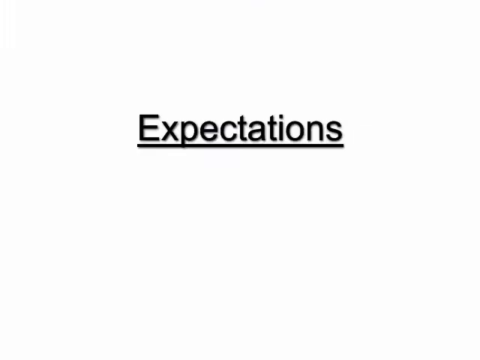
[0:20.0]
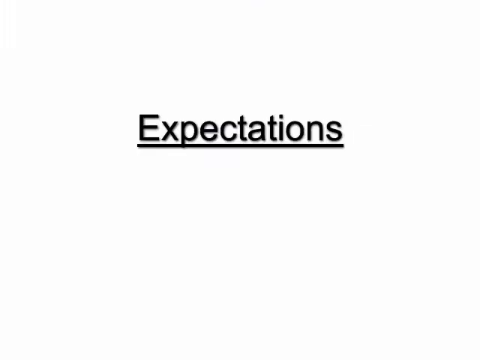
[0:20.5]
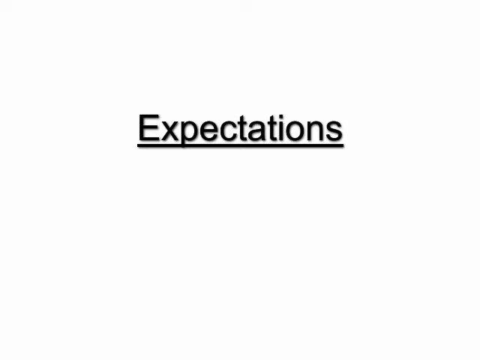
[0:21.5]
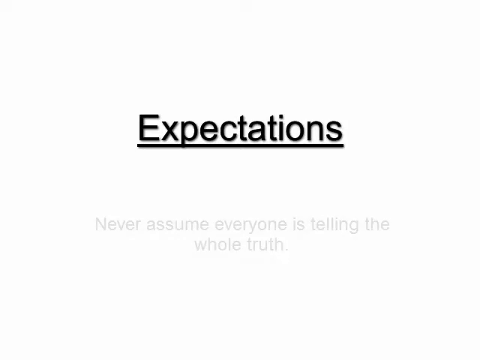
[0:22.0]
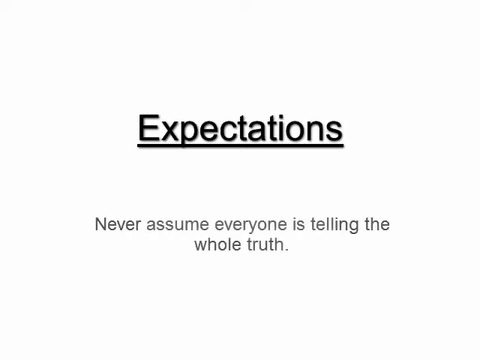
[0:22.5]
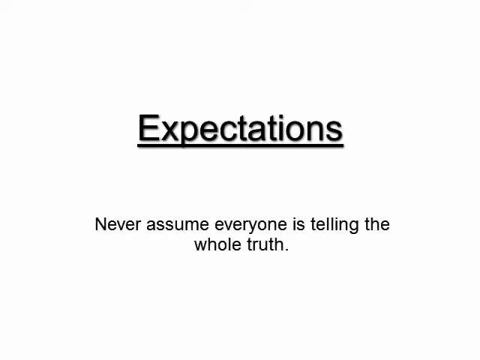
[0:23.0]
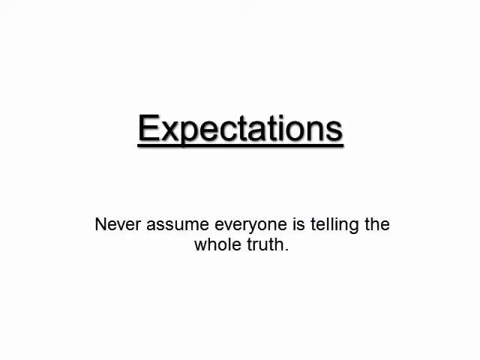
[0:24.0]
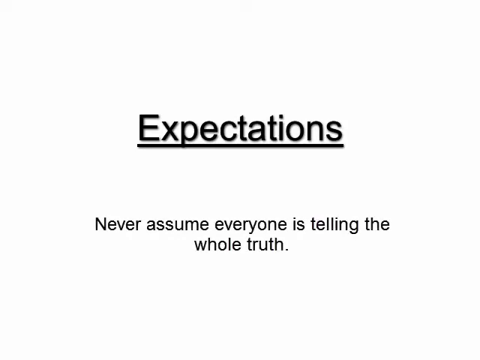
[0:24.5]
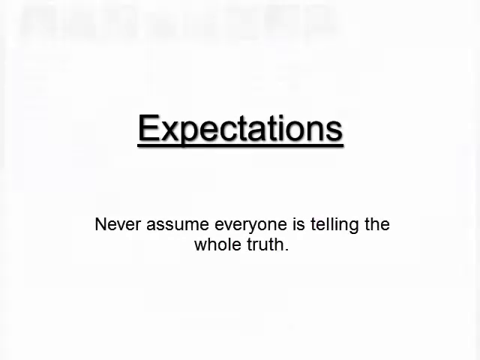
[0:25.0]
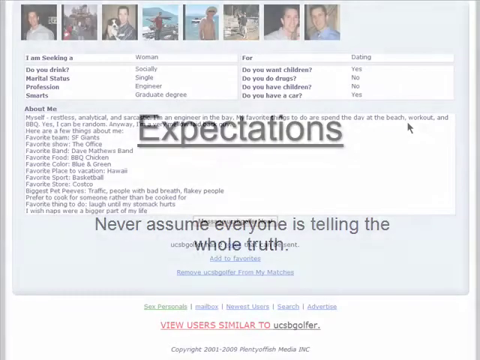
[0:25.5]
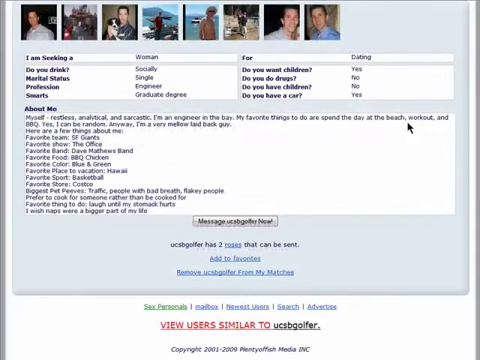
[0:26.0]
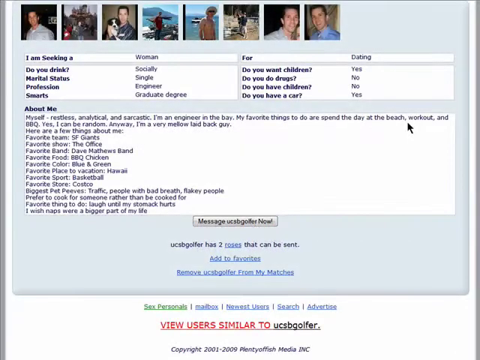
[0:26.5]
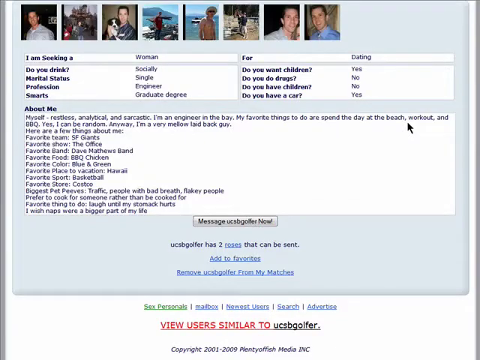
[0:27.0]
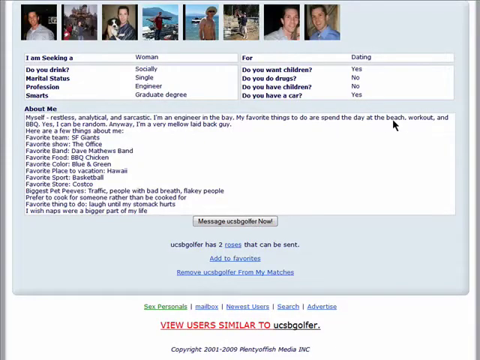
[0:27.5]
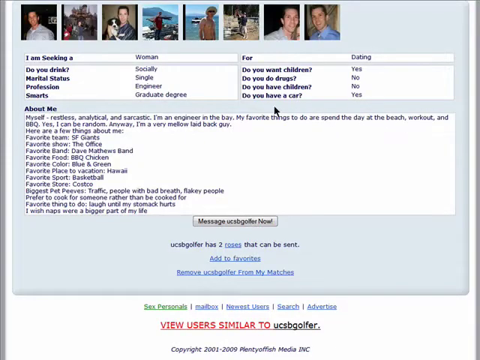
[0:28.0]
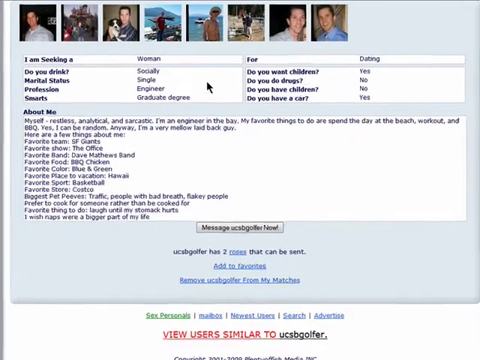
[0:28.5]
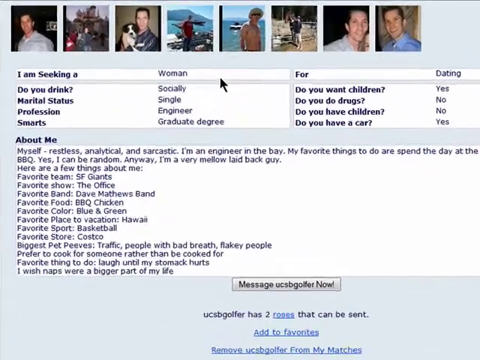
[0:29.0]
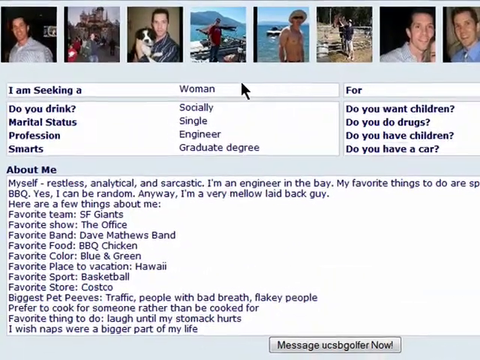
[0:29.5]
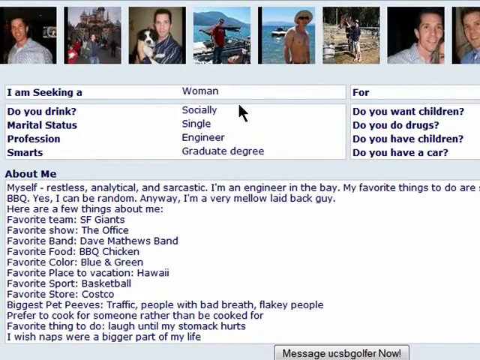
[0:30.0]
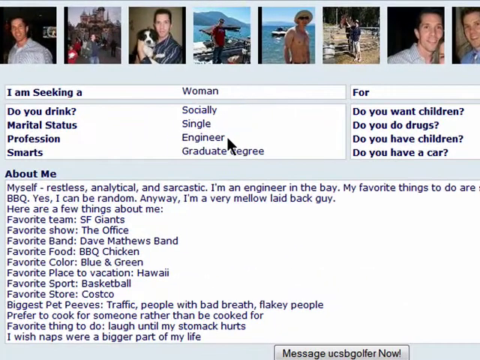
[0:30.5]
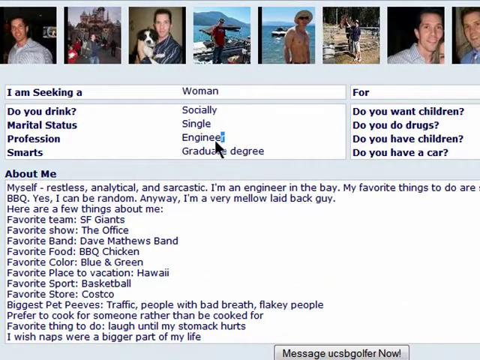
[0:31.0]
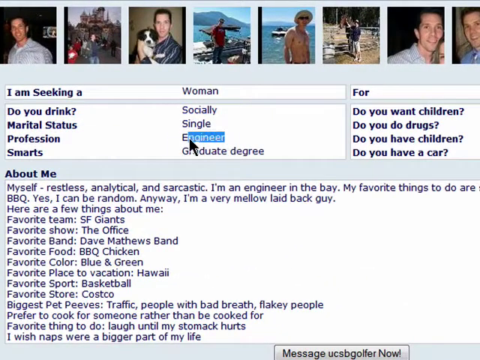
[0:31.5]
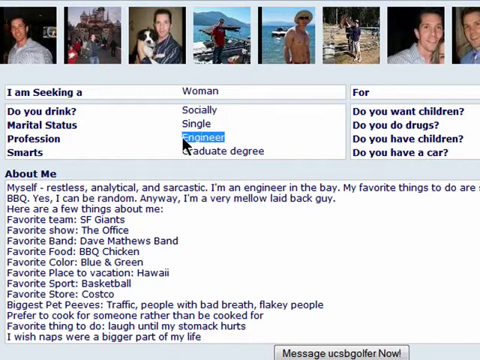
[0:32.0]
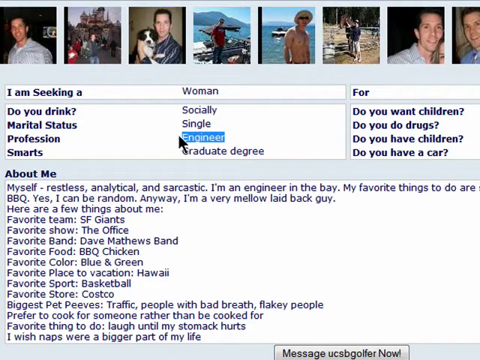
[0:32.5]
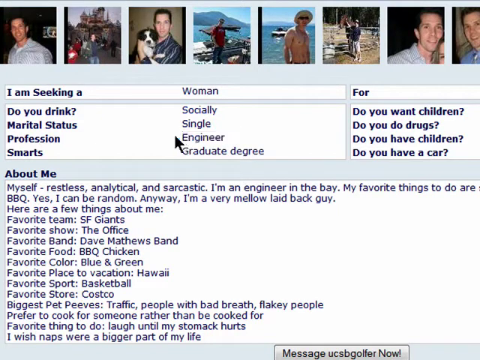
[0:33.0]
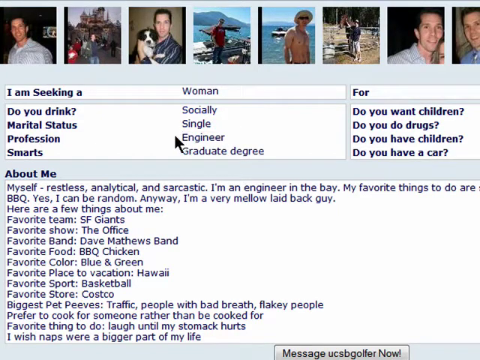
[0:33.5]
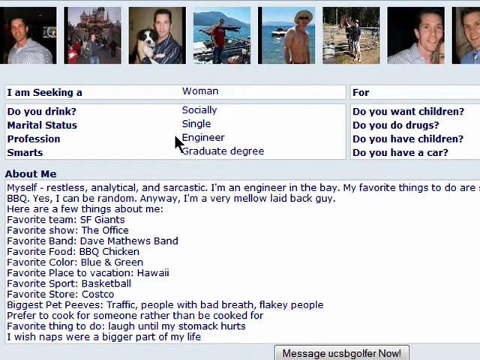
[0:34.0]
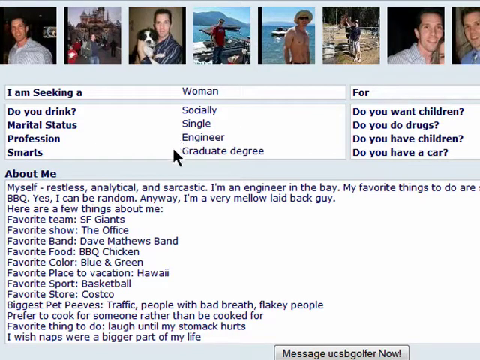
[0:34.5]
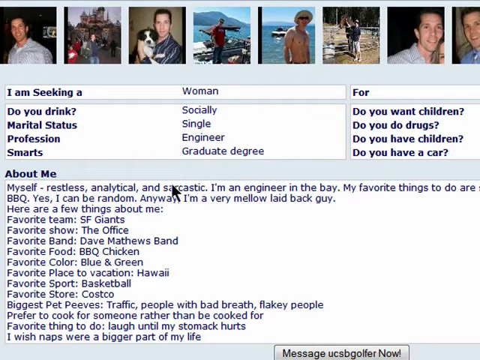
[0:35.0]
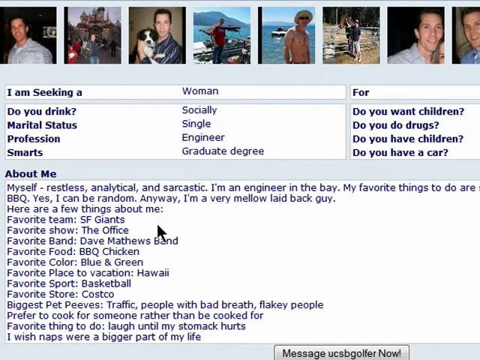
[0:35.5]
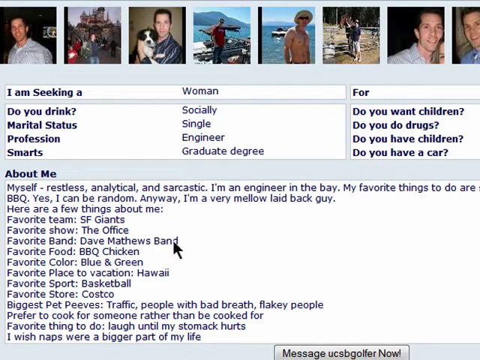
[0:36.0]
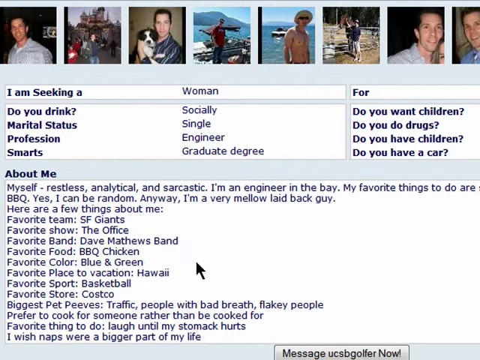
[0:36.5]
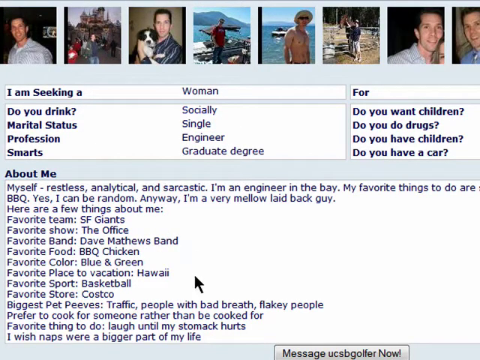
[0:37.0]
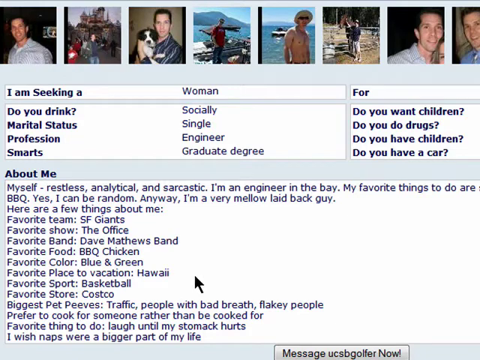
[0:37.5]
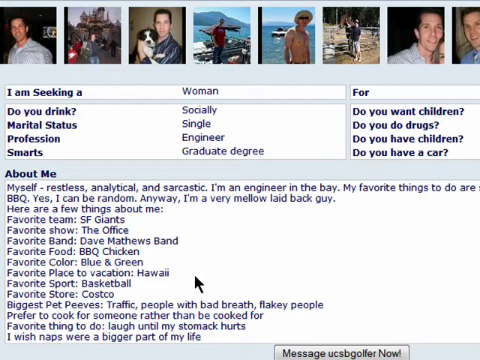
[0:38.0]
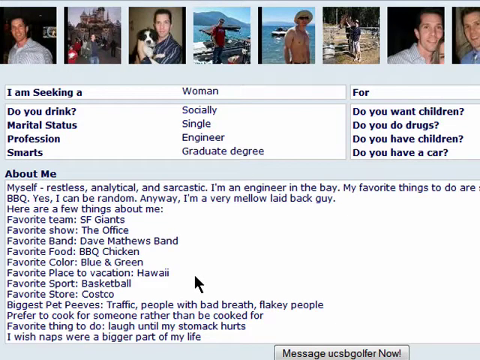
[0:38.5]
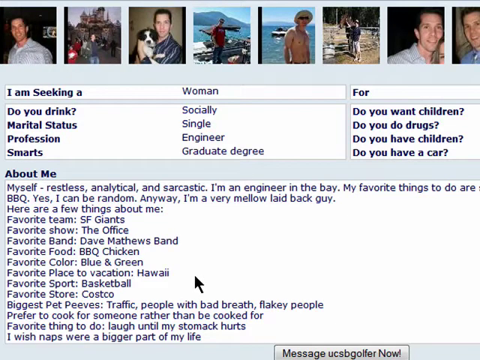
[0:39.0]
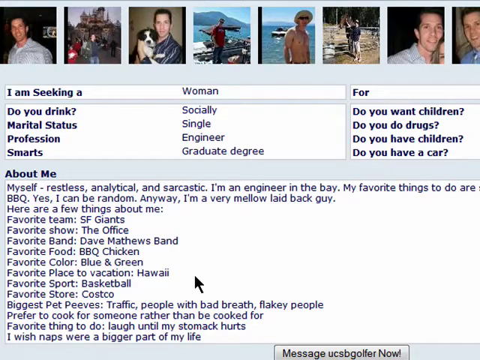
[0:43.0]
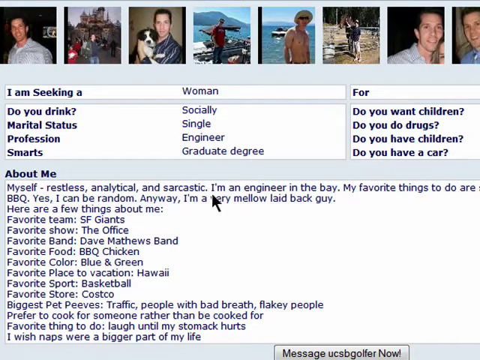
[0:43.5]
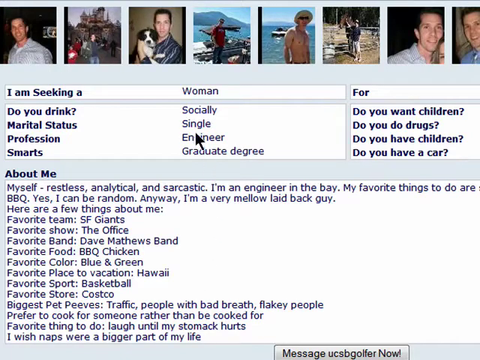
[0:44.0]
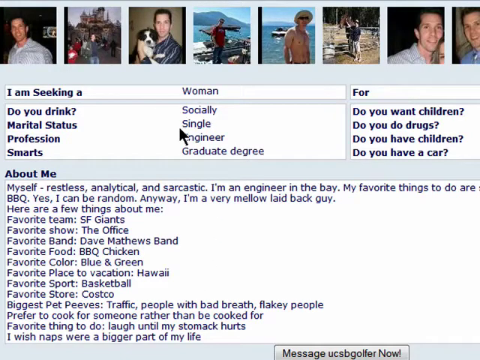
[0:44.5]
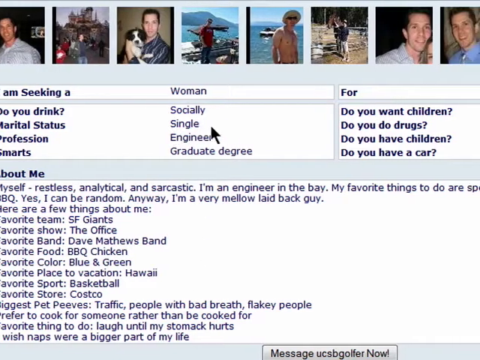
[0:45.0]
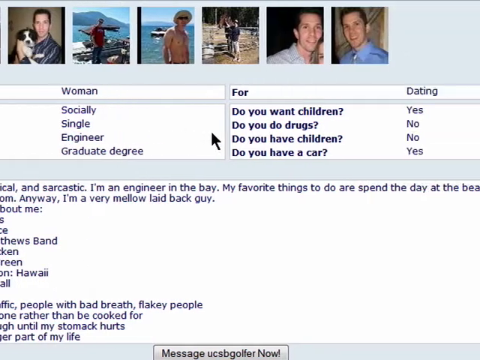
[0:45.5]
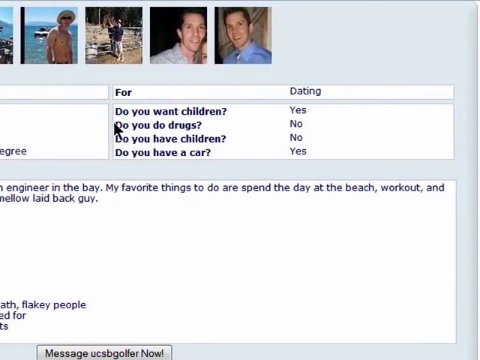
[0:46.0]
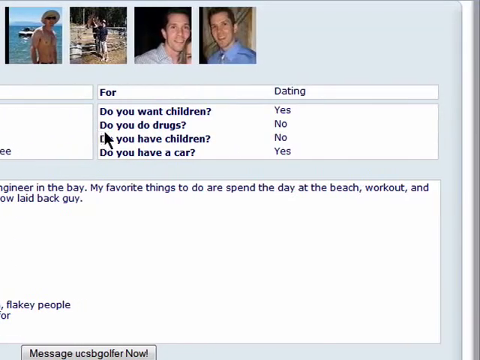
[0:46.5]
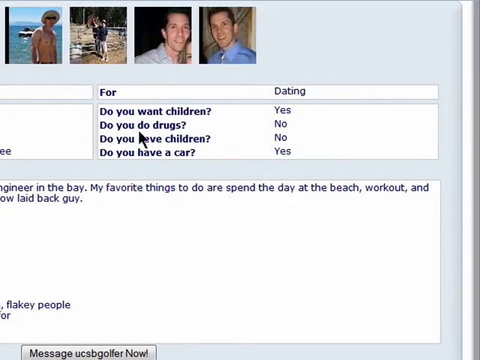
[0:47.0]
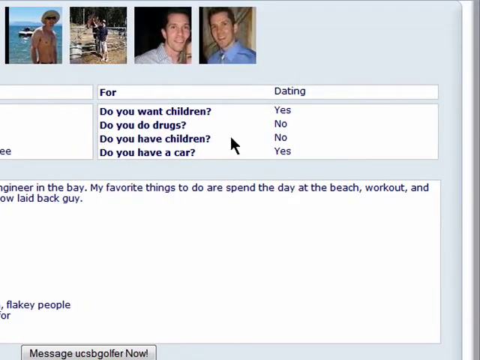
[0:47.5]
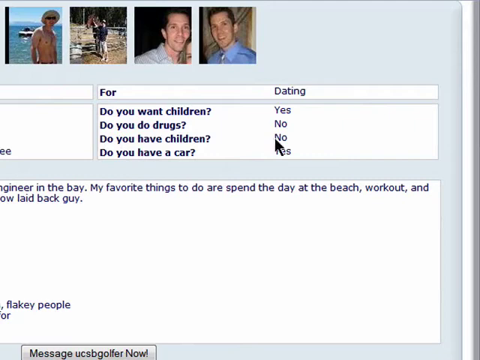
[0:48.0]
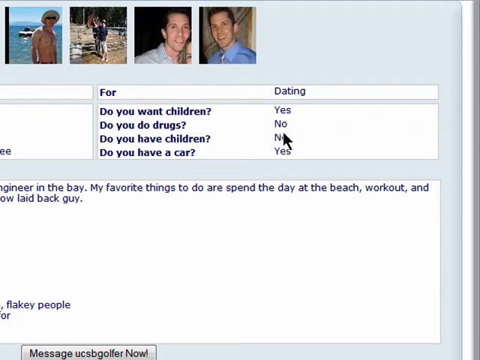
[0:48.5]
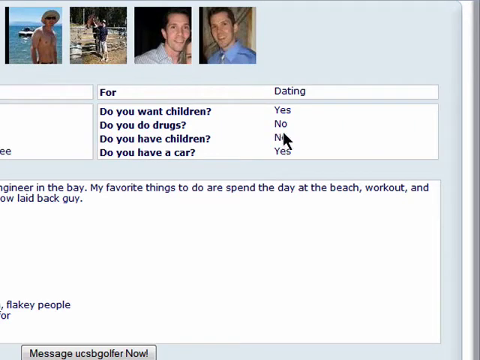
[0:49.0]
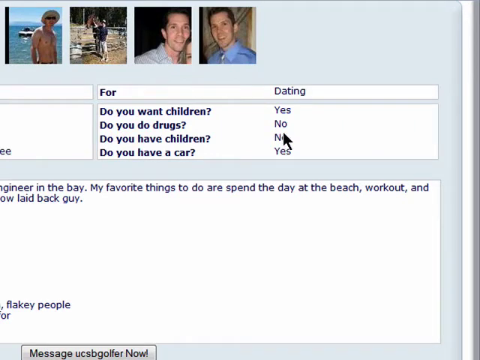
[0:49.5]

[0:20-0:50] A white screen shows the word "Expectations" in black across the middle. After a few seconds, a line appears underneath reading "never assume everyone is telling the whole truth". This fades out to a screenshot of a personal dating page. Across the top are seven images of a man in different settings. Below are boxes for selected items, including do you drink, do you want children, marital status, profession and other dating-related statuses. Underneath is an about me text box with a description the person has written about themselves, then a button for messaging this individual, and a footer for the website at the bottom. A black arrow cursor on the right-hand side moves toward the left as the video zooms in on one of the status boxes. The cursor highlights the profession of engineer in blue. After a moment it moves down to the About Me section, then back up as the screen scrolls over. The cursor runs underneath the line "do you do drugs" and points to the "no" selected beside it.